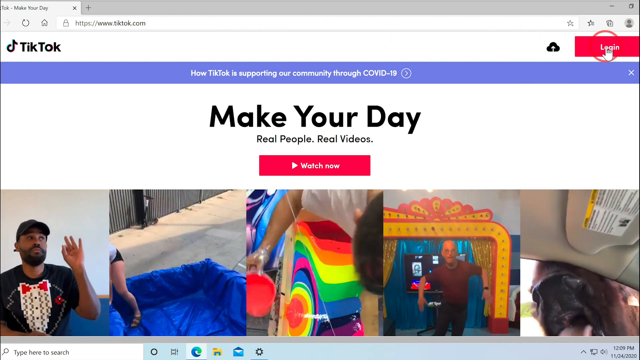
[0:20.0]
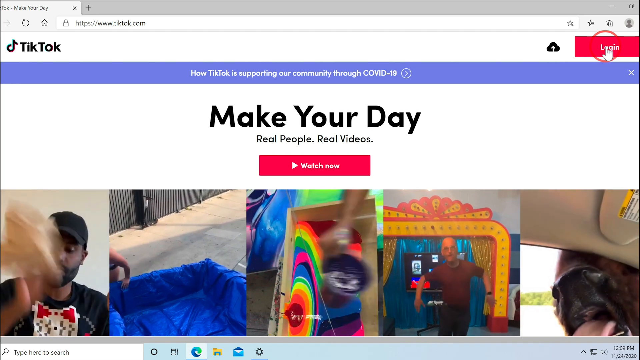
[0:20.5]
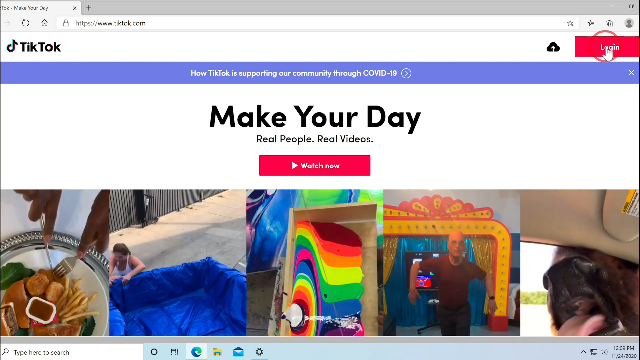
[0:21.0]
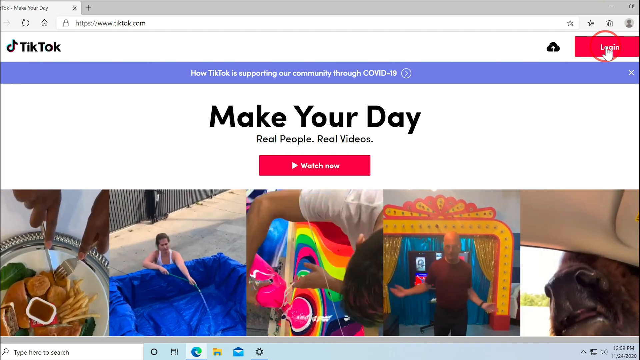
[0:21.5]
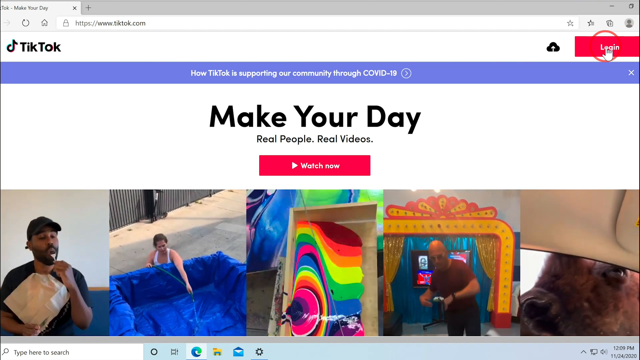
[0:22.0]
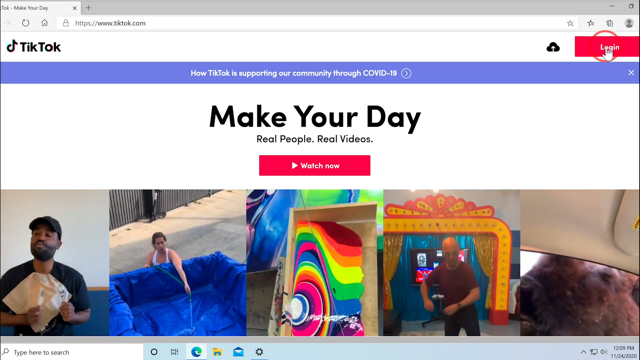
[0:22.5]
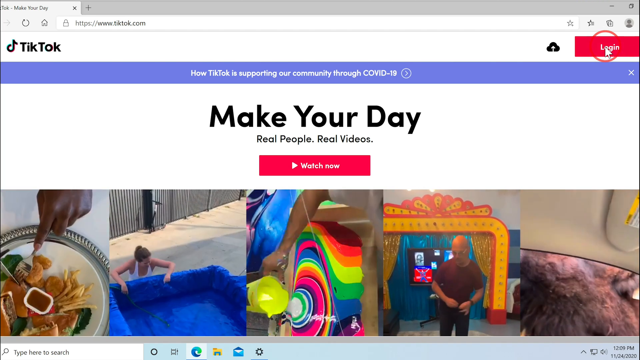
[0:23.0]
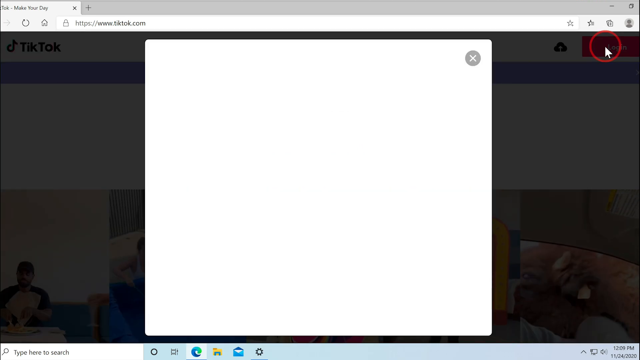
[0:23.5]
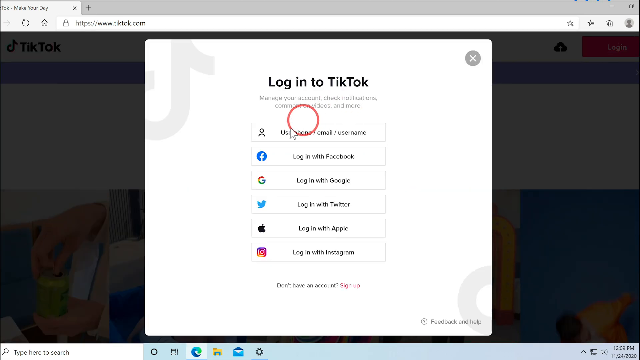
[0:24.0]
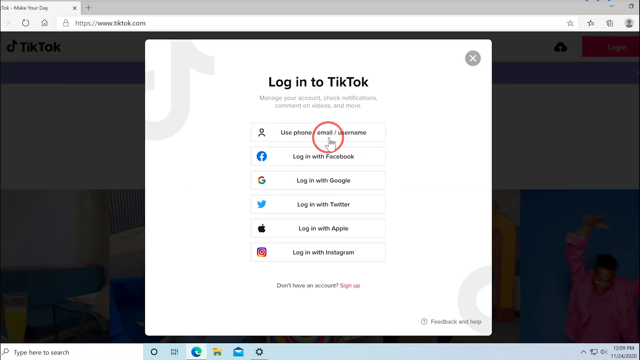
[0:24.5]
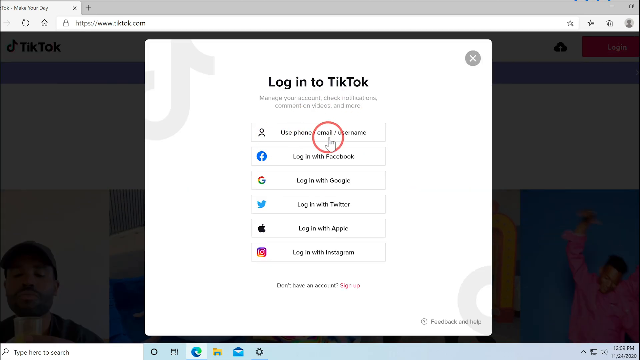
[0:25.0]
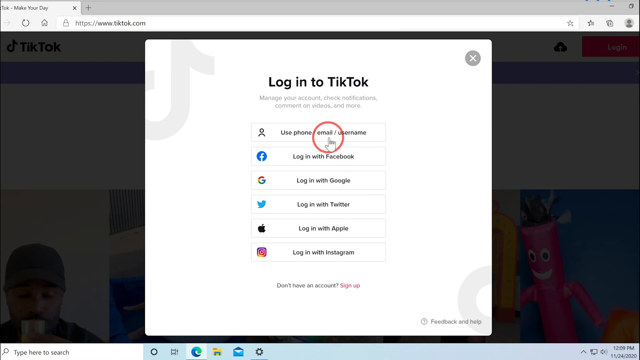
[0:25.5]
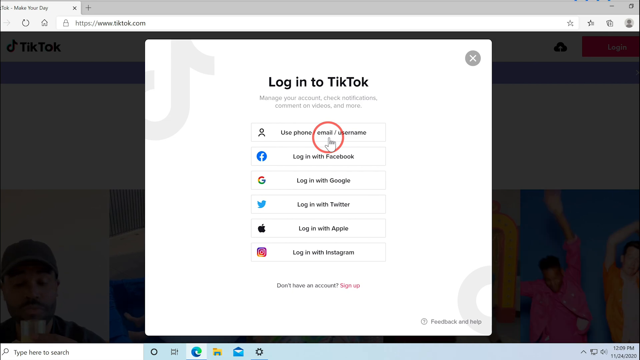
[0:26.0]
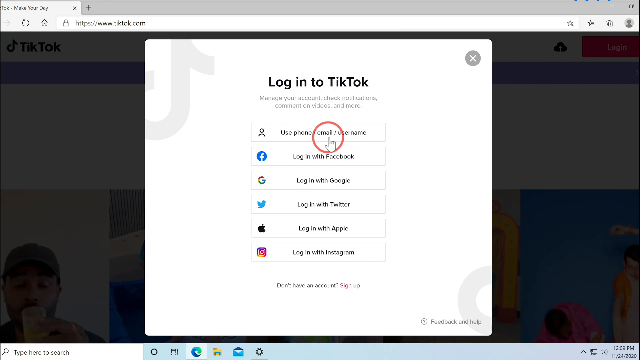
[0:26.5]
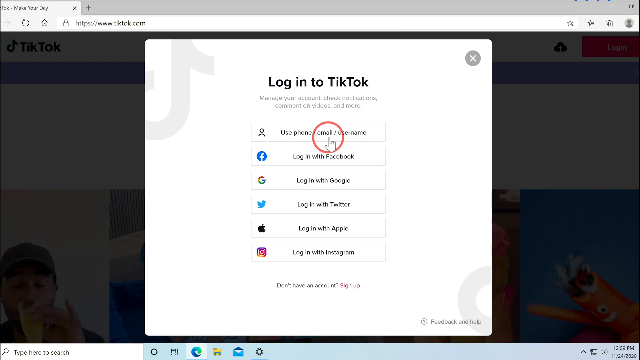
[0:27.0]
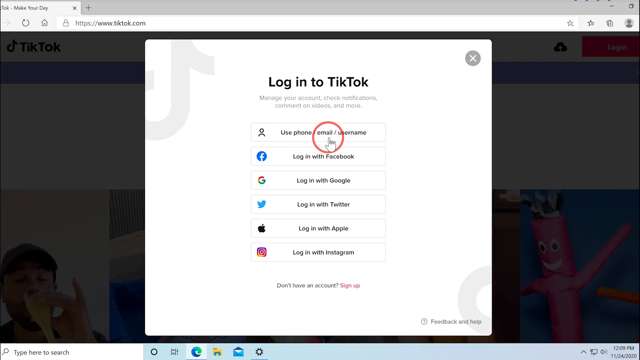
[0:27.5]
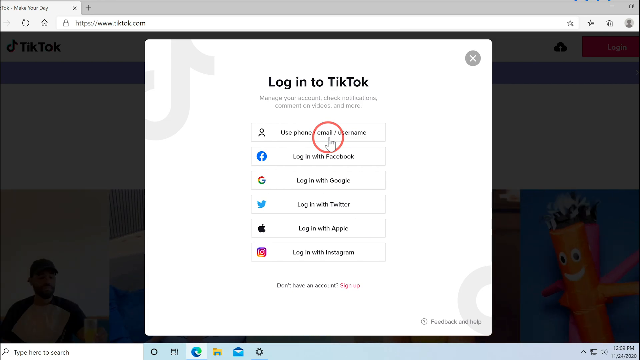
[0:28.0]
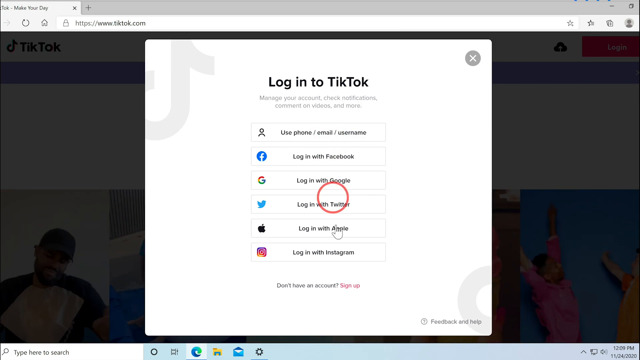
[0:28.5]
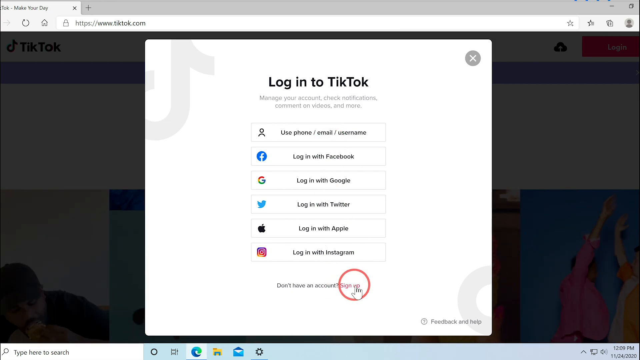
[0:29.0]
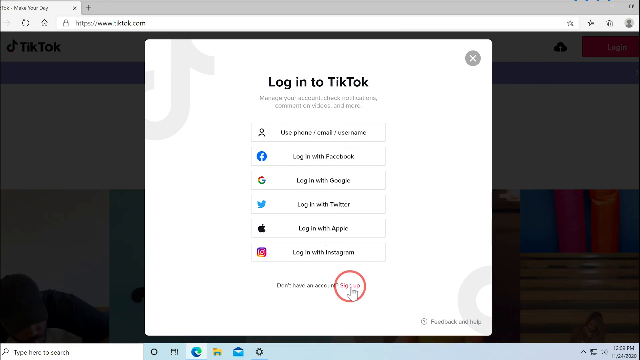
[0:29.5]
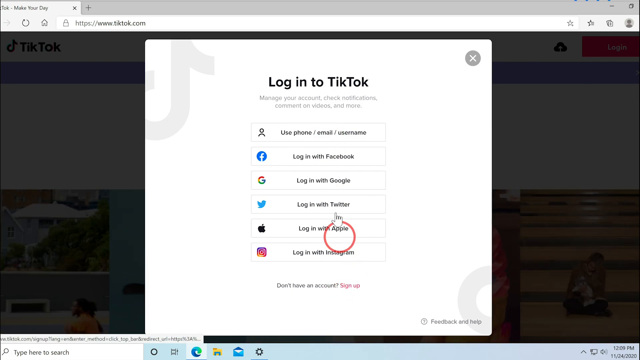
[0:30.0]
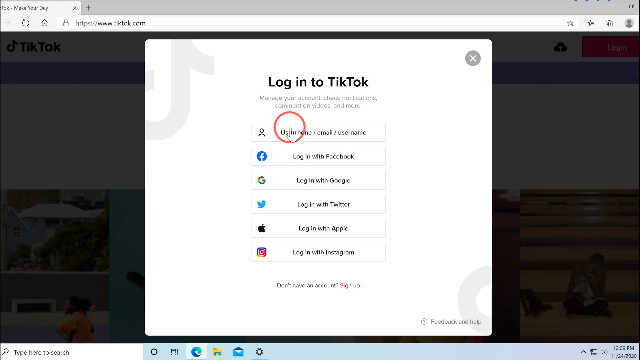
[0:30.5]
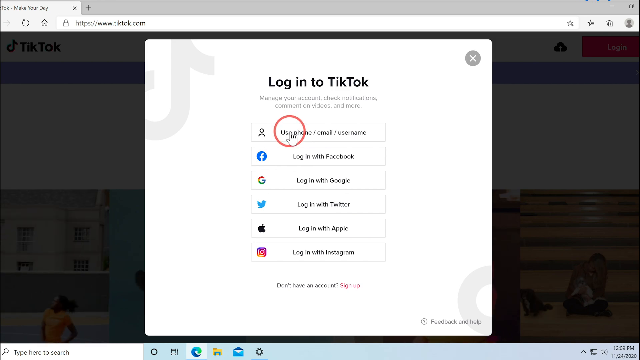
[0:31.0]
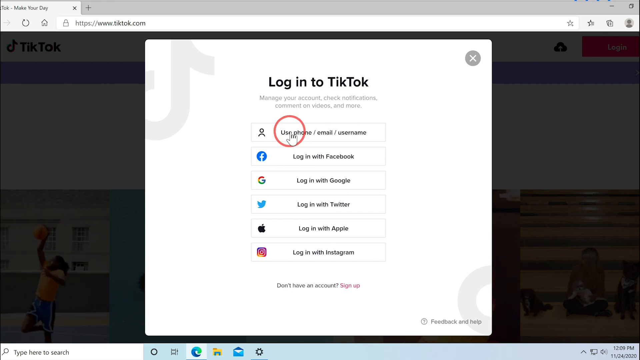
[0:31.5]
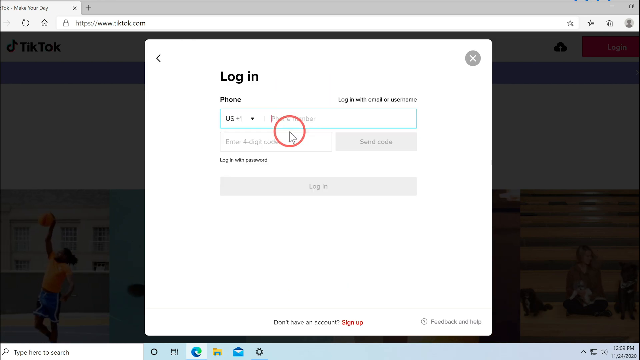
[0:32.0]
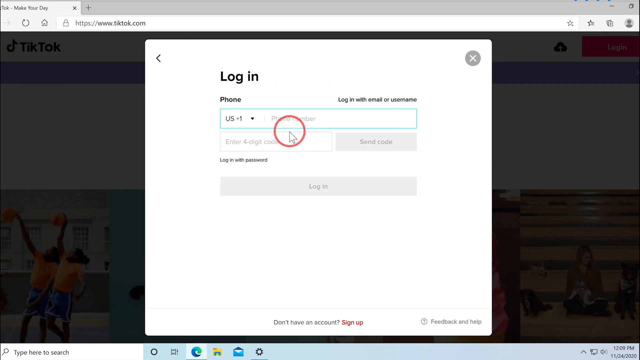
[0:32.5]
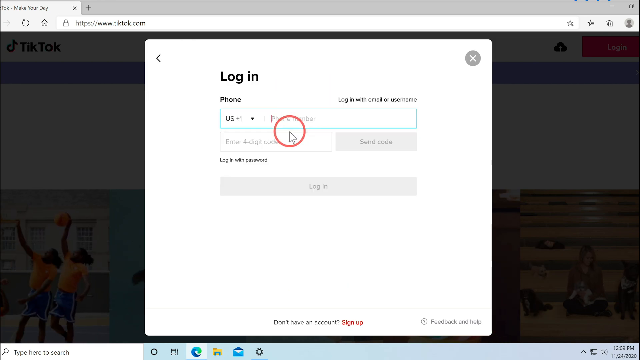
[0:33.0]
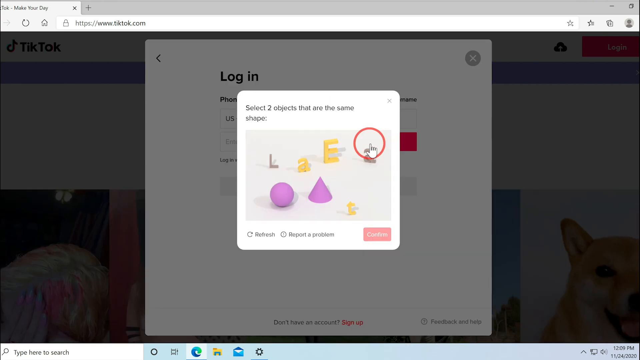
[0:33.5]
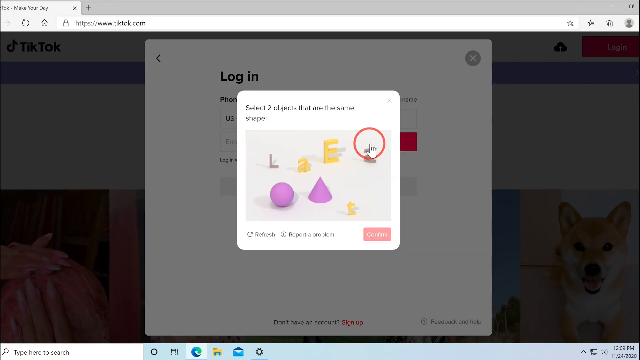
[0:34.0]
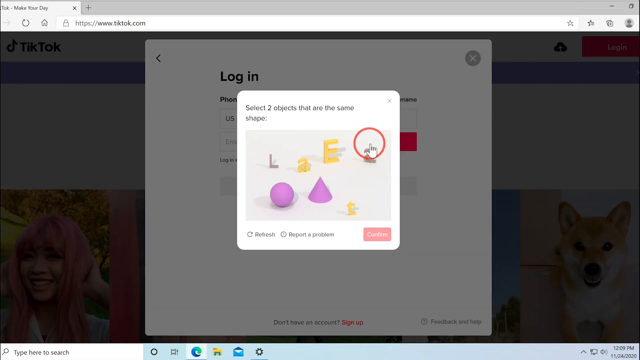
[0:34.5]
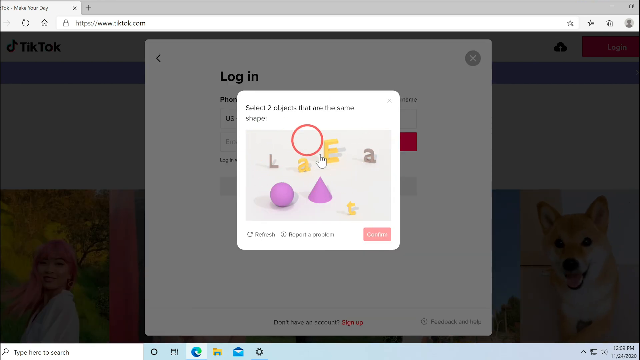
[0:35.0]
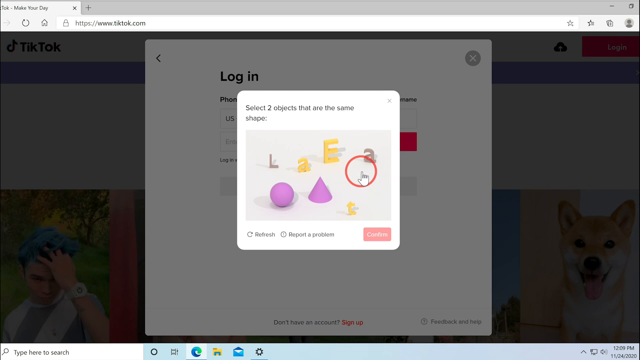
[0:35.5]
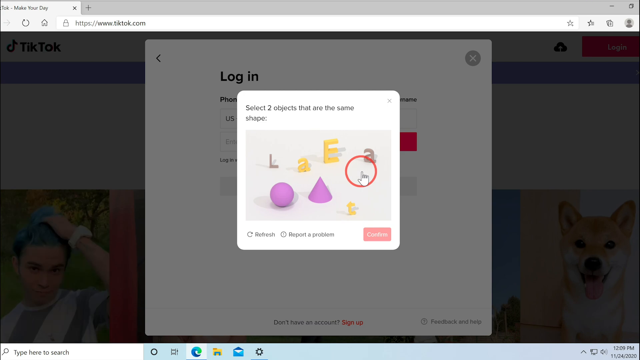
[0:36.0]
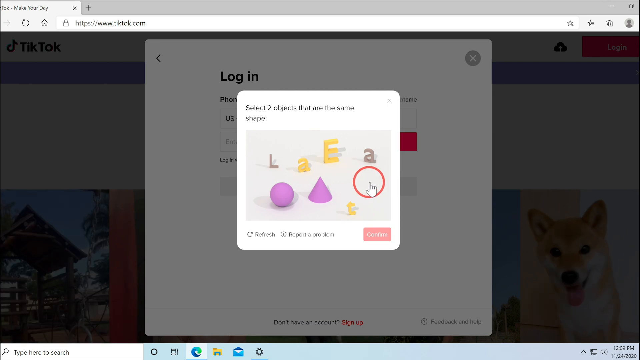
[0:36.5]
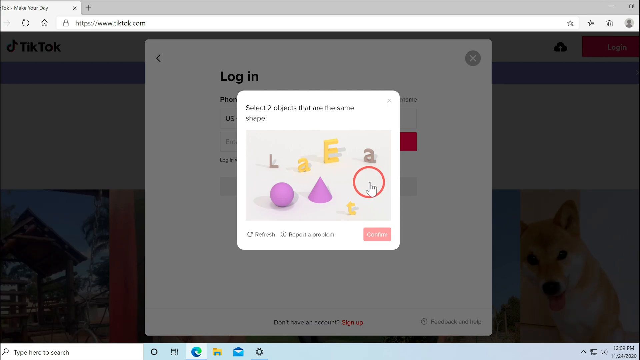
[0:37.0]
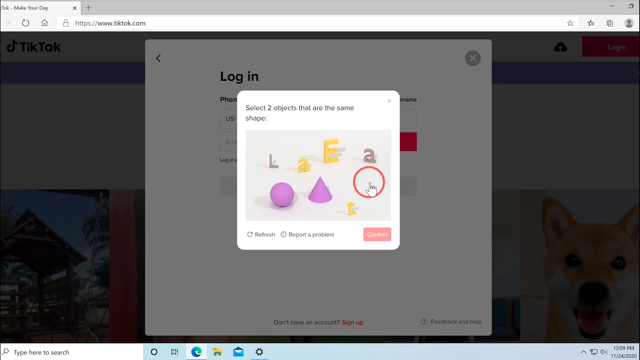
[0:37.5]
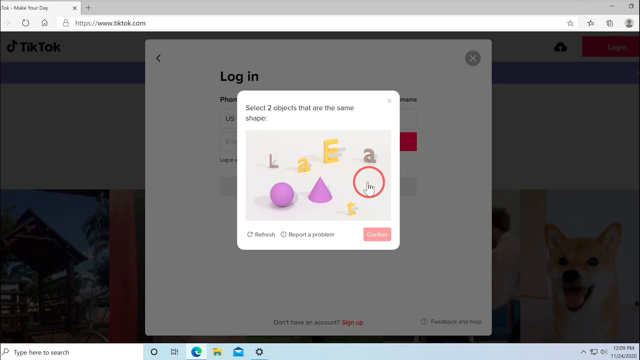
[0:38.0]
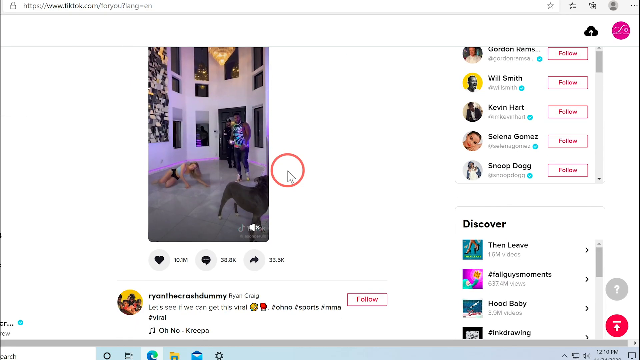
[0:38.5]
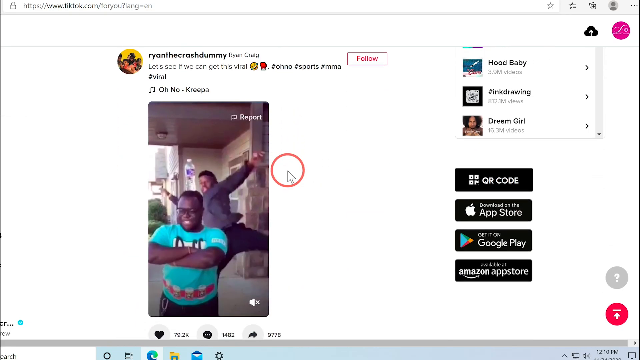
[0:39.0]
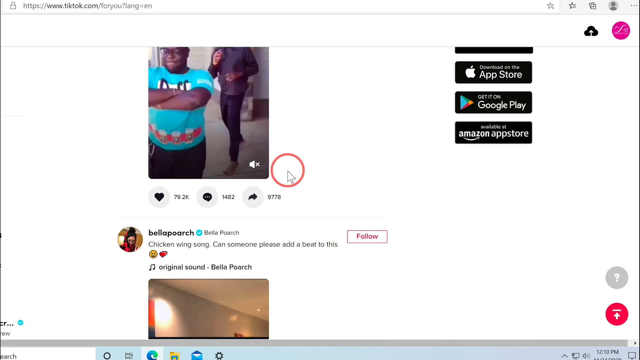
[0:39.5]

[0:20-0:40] A TikTok page says "make your day" and offers five videos to choose from. The first shows a guy wearing a hat, with what looks like a small mullet, a beard and a mustache, and a dark T-shirt with a logo on the front; he holds his left hand up with his thumb bent over. The next looks like somebody on a sidewalk setting up something like a pool; only their leg is visible, and the pool looks blue, with no visible water. The one in the middle shows some kind of rainbow-looking thing that somebody is holding, with a logo, the side of somebody's face and somebody's arm visible. Another shows a guy standing off in the distance, and the last looks like somebody inside a car with their head right by the visor; it is all dark, but the headliner and visor of the car are visible. The other videos are too dark to see. After a log-on appears, all the videos start moving. A white page reads "log in to tick tock" while the mouse moves around as if deciding what to choose. The view goes to the login, then text says "select two objects that are the same shape". A bunch of TikTok videos then scroll by, and the view returns to the beginning of the page.